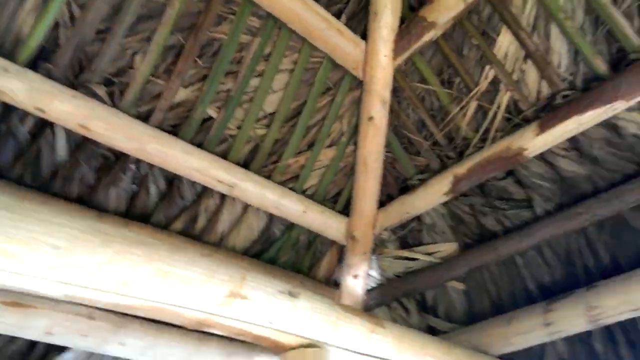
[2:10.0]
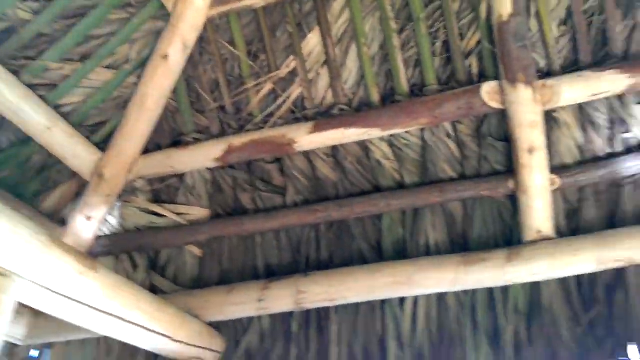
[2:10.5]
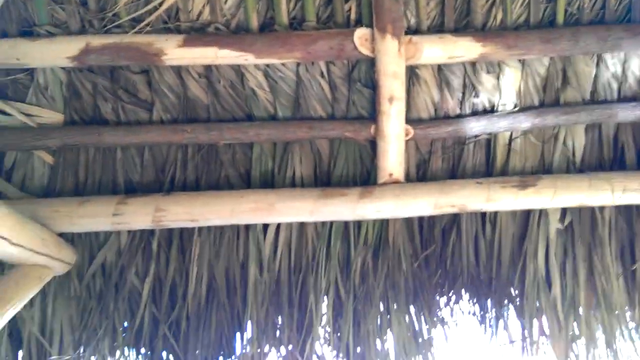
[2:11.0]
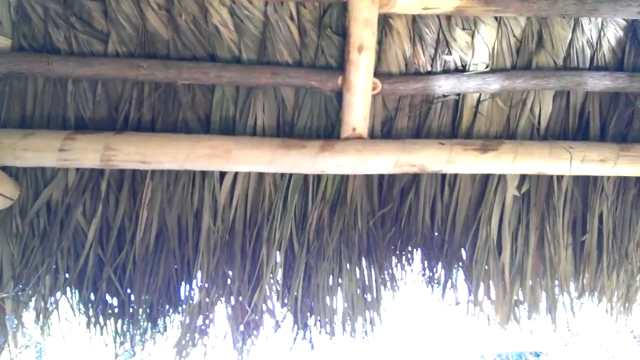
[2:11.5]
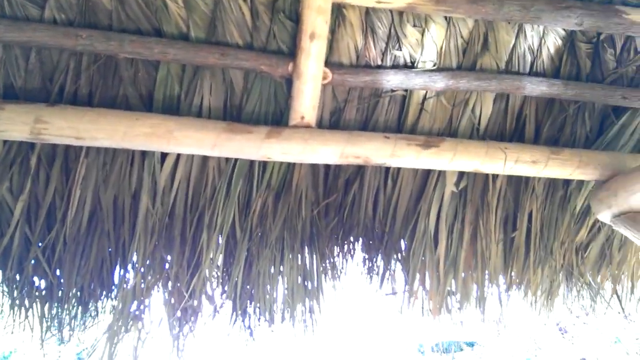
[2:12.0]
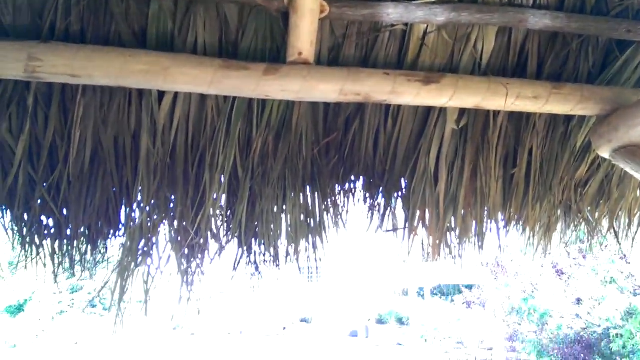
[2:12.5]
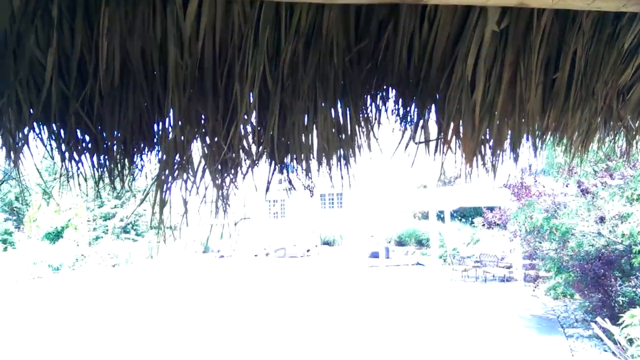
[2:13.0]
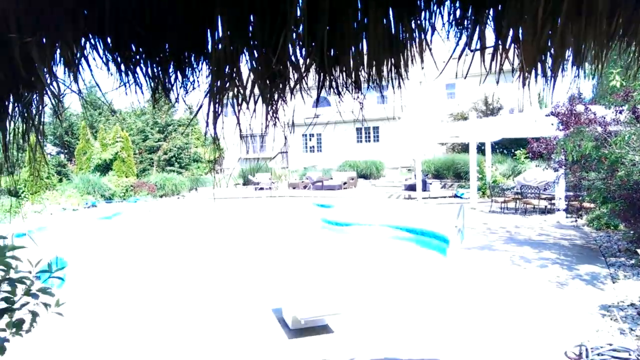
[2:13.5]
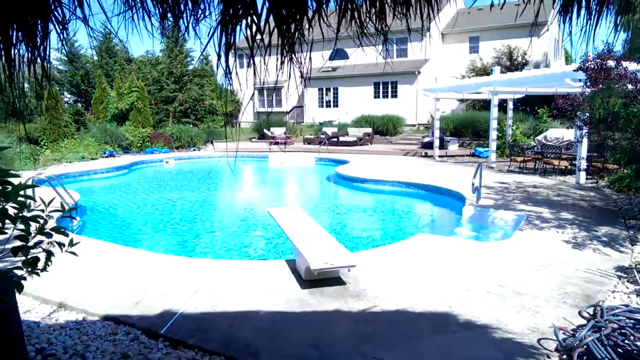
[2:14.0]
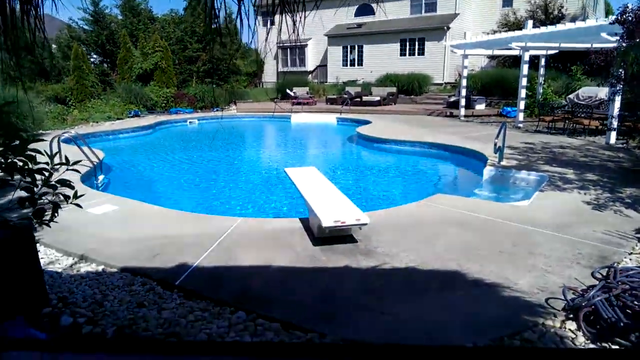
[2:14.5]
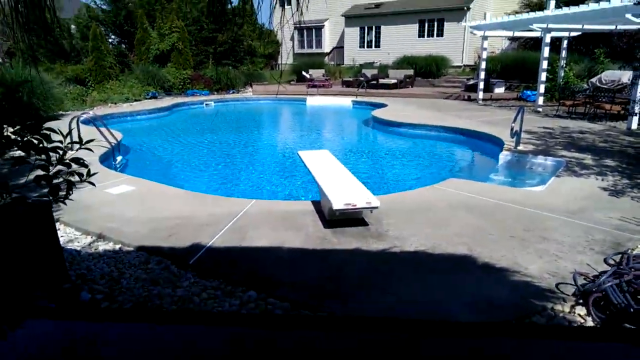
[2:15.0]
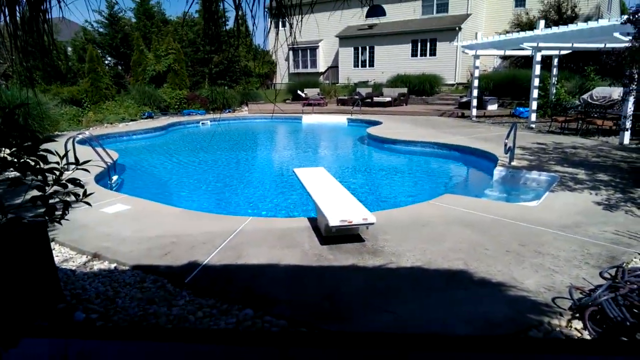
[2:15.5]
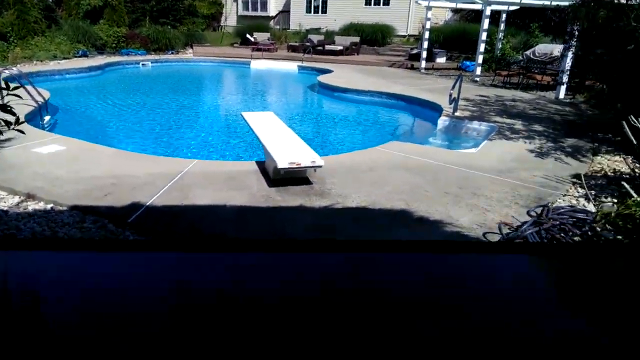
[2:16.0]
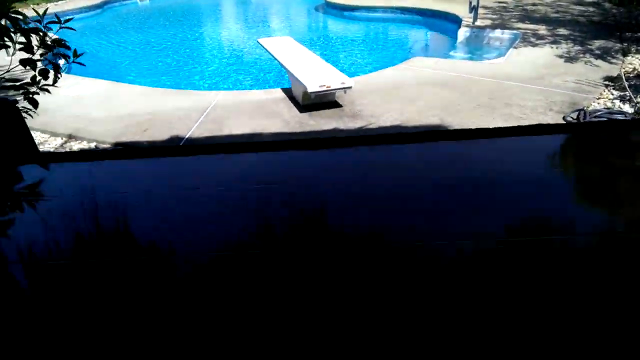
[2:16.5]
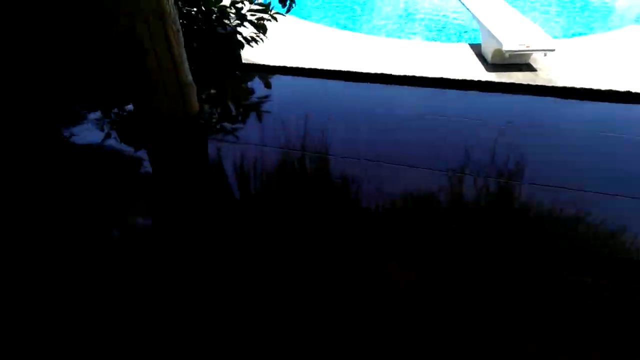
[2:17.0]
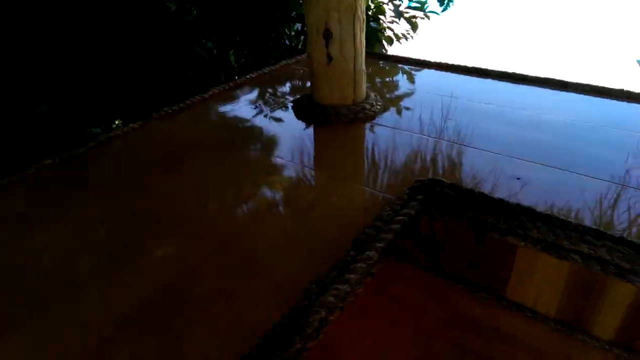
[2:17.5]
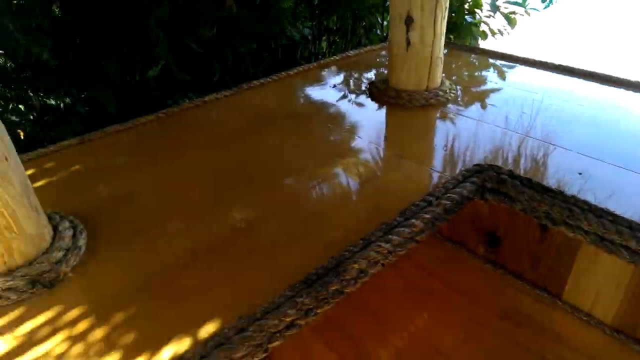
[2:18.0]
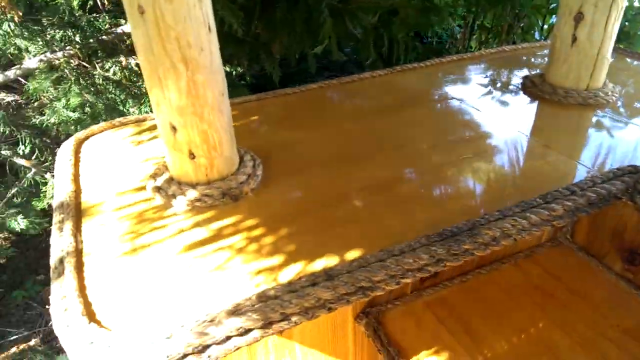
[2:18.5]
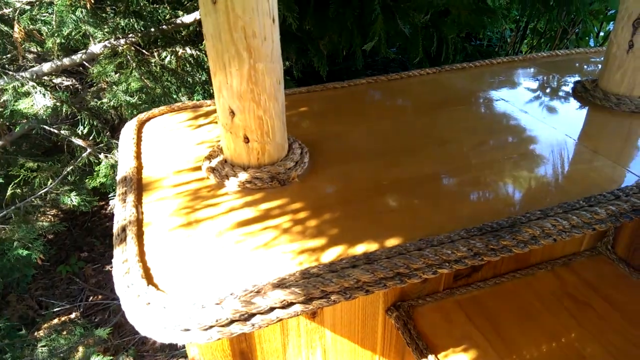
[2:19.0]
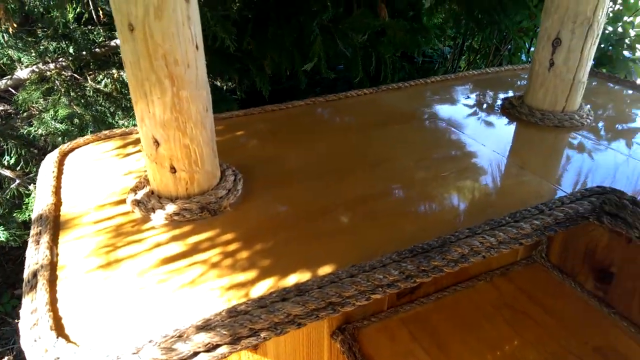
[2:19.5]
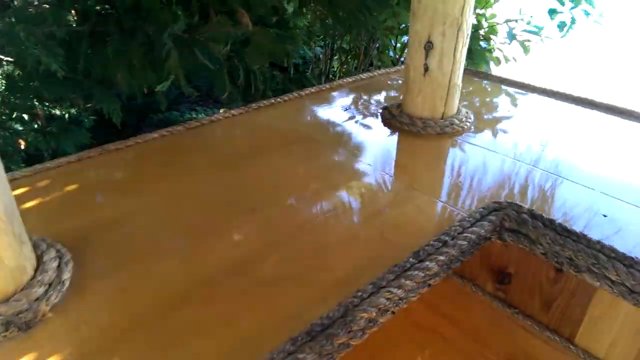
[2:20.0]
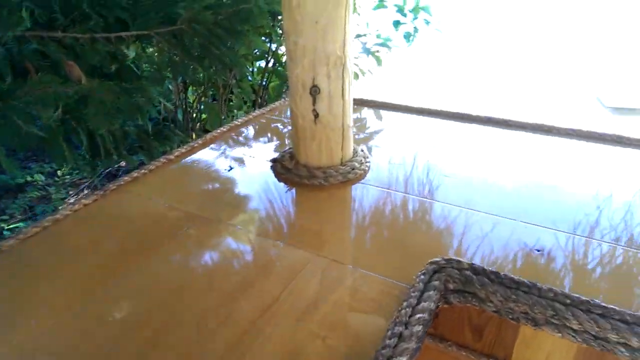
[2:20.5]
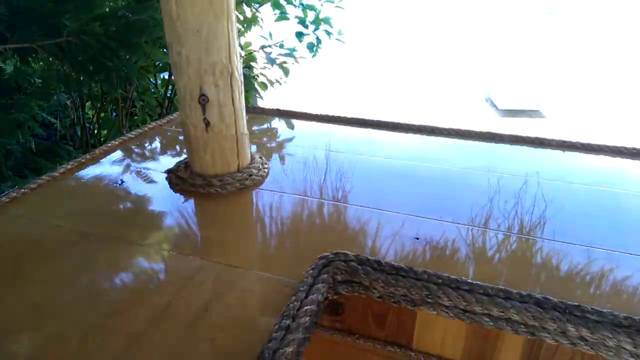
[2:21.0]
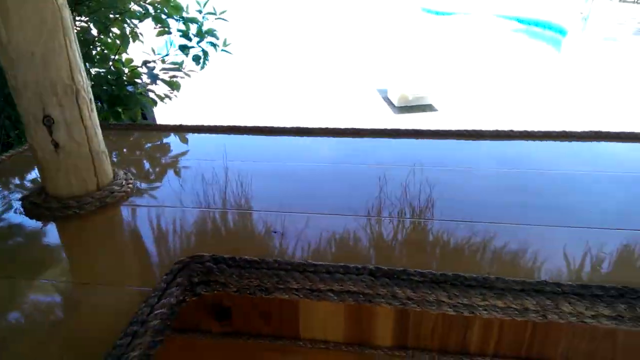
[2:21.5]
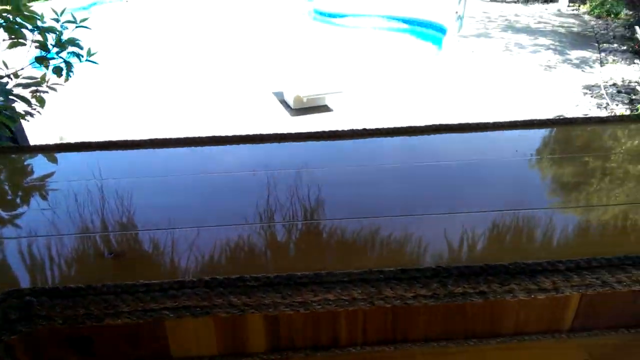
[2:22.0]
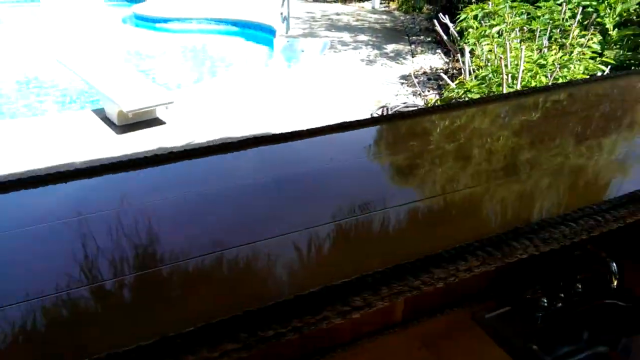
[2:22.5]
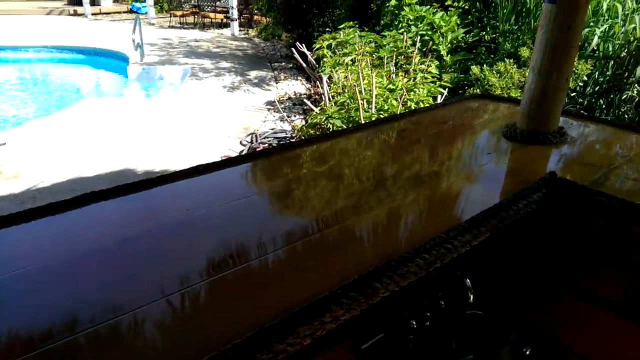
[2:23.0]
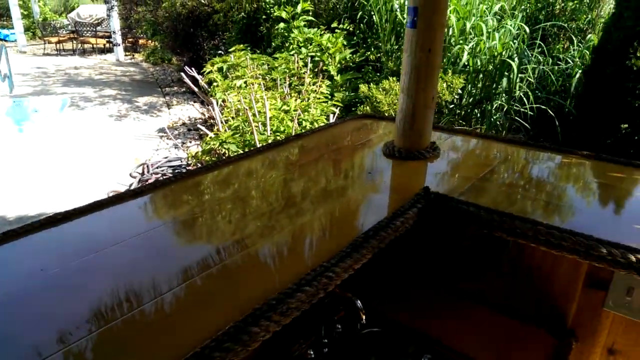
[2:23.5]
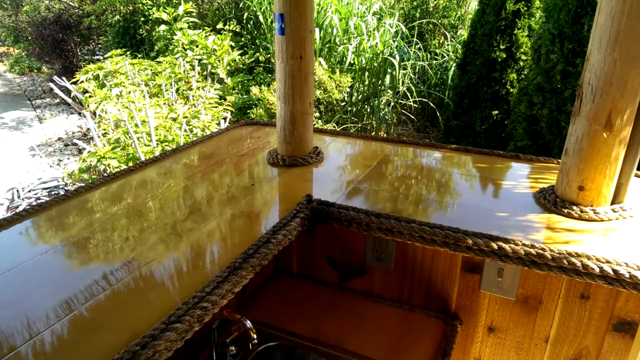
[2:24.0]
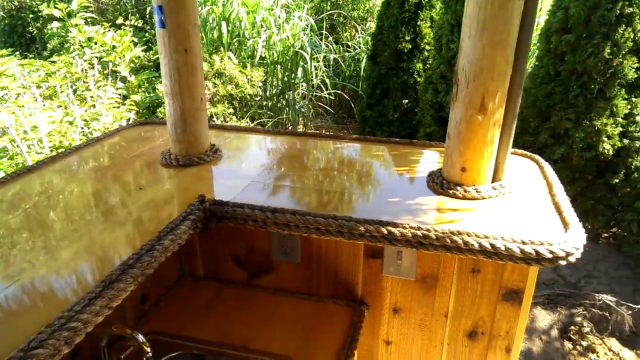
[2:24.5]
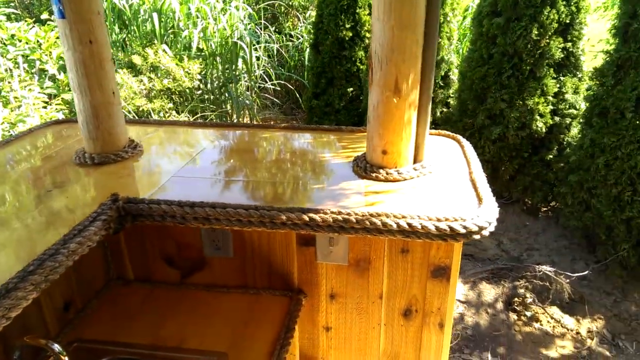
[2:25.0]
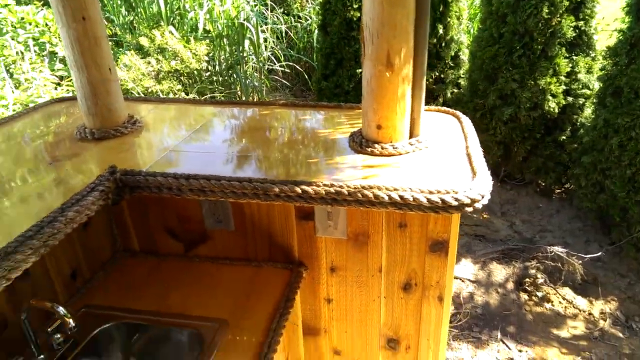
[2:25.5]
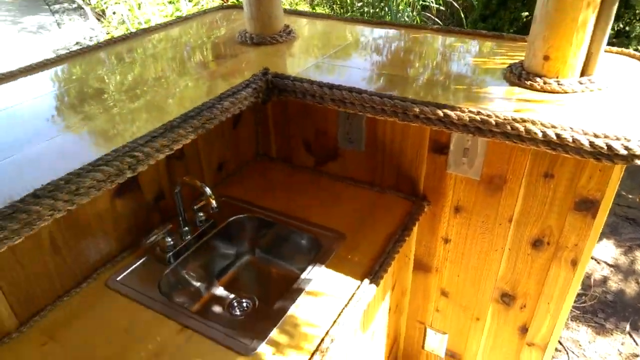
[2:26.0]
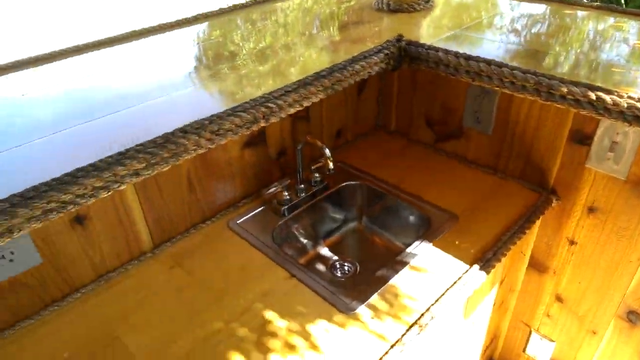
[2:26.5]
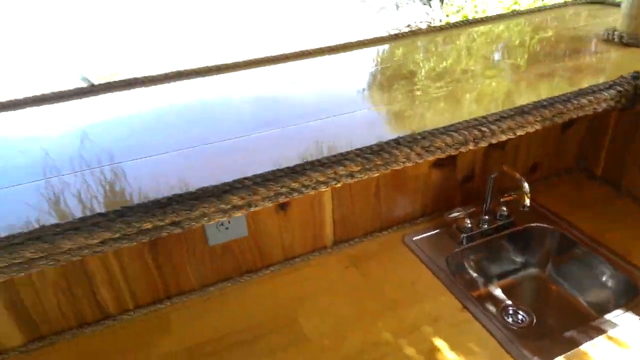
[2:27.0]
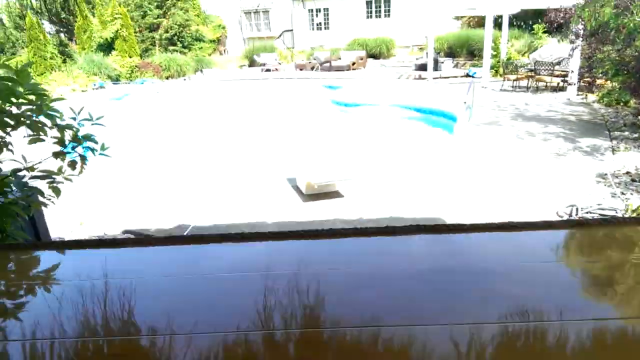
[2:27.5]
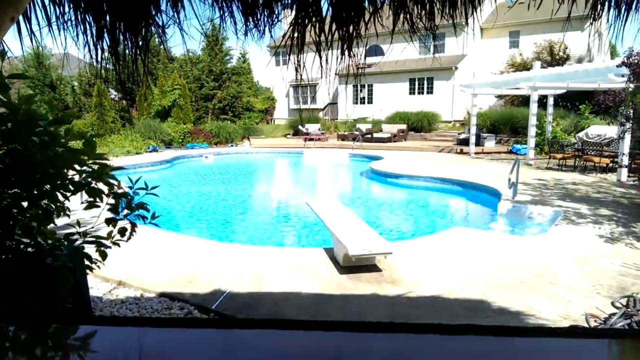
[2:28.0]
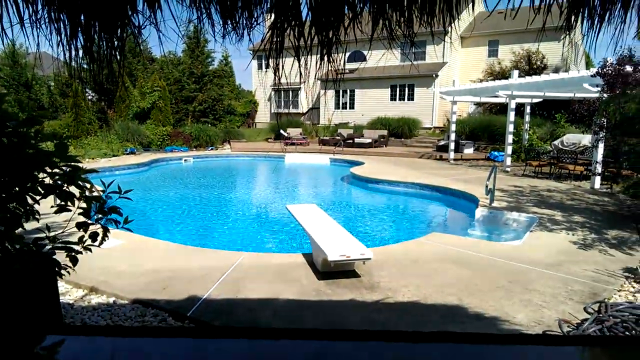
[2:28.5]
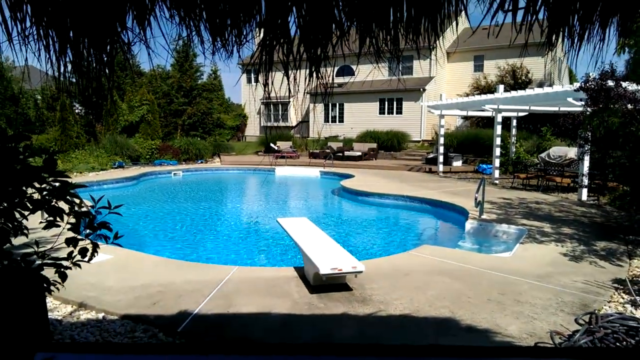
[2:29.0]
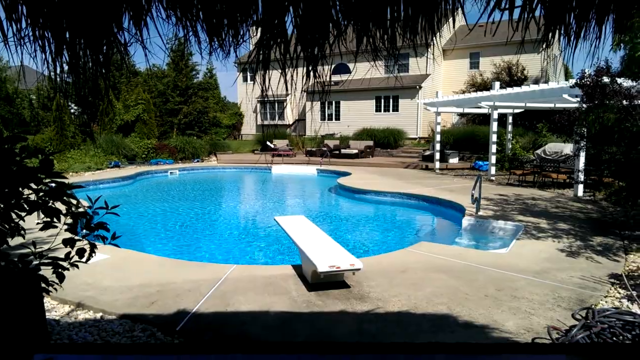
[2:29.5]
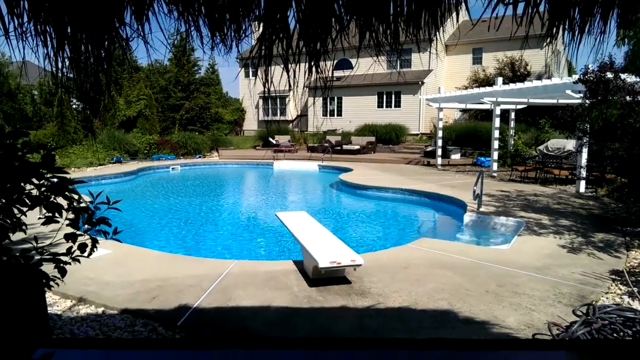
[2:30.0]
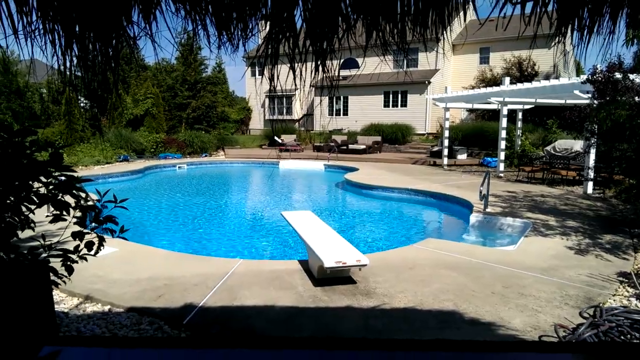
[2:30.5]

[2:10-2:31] The inside of a thatched roof is shown. The roofing structure is made of wooden beams that look like bamboo, and the dried-out grass of the thatched roof is visible through the beams. The camera pans downward from the roof to show a swimming pool with an irregular curved shape and a white diving board, and a white house on the other side of the pool. To the right side of the house is a shade made of white poles, with patio furniture underneath it. On the other side of the pool is some poolside furniture just beside the house. In the background is dense, thick vegetation, with tall trees that look like pine trees to the left and right of the house. The camera moves shakily, then shows the countertop of the structure it is filming from, with dense, thick vegetation and plants beside it. The countertop looks shiny, as if made of Formica or some kind of synthetic material. The camera moves a bit further in to show a stainless steel sink and faucet, then pans upward again to give a view of the house and the swimming pool.